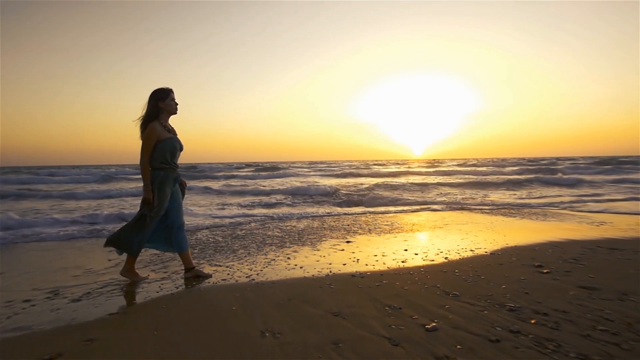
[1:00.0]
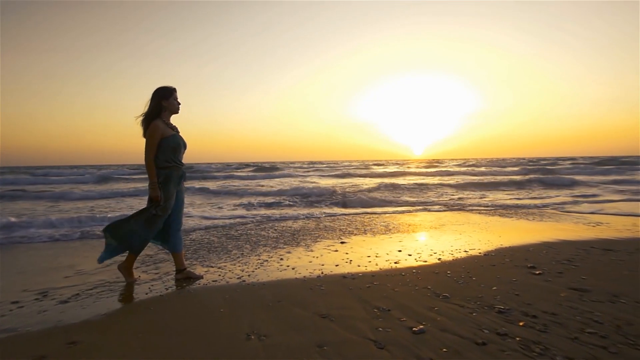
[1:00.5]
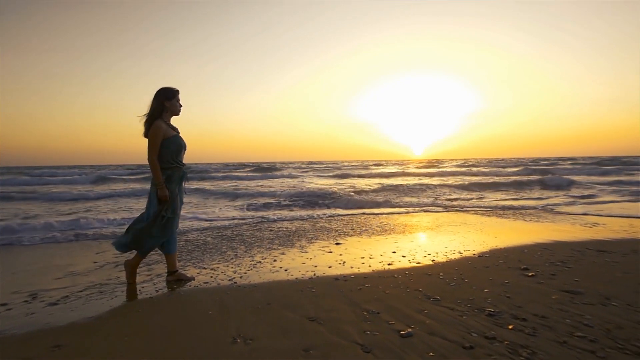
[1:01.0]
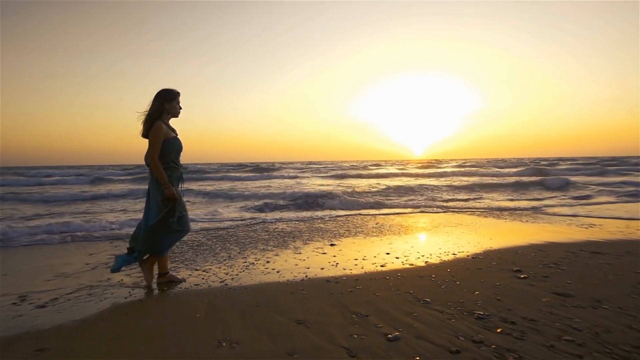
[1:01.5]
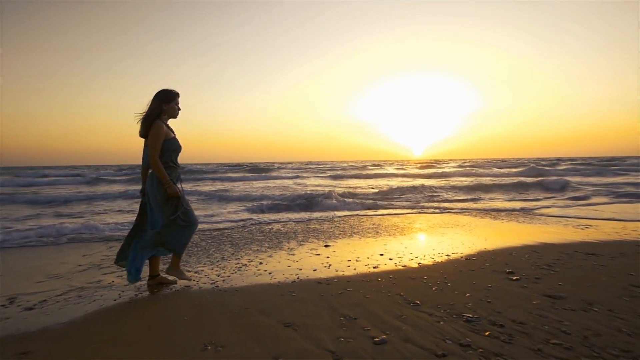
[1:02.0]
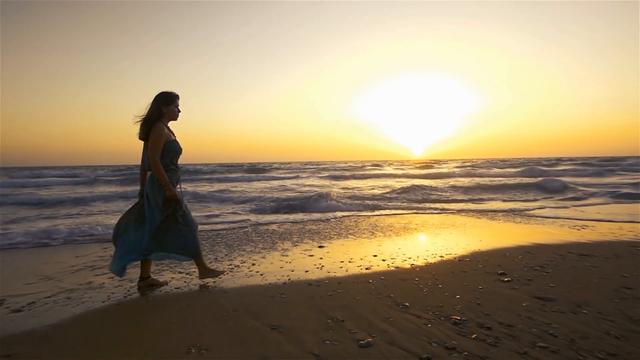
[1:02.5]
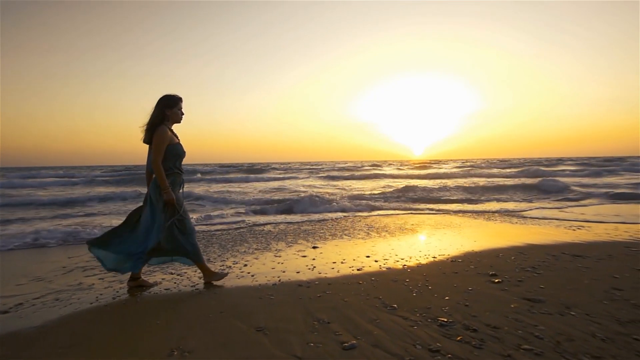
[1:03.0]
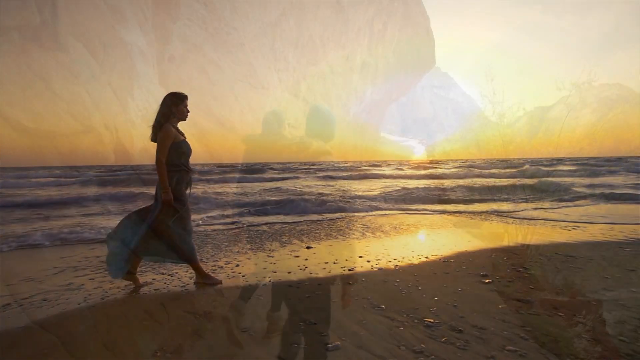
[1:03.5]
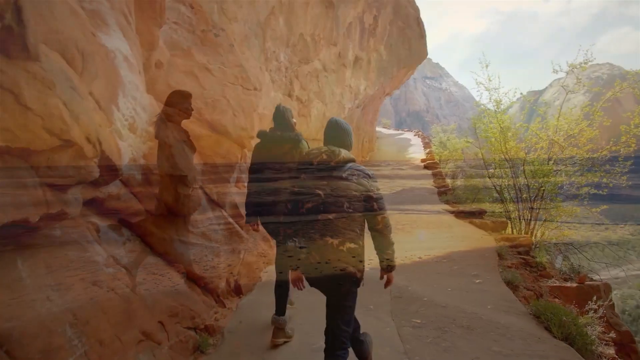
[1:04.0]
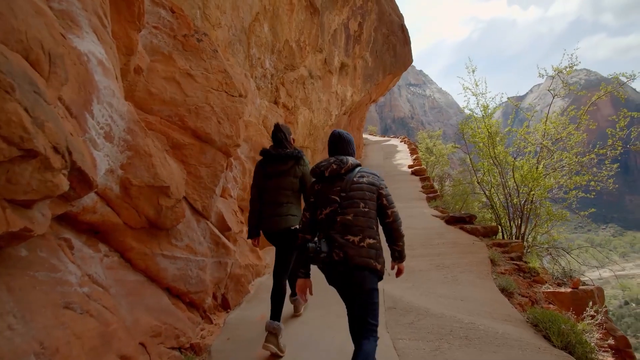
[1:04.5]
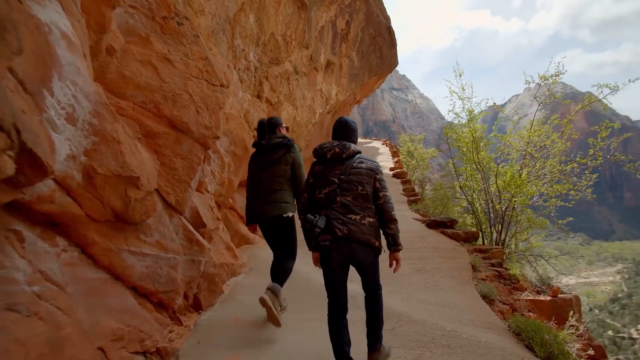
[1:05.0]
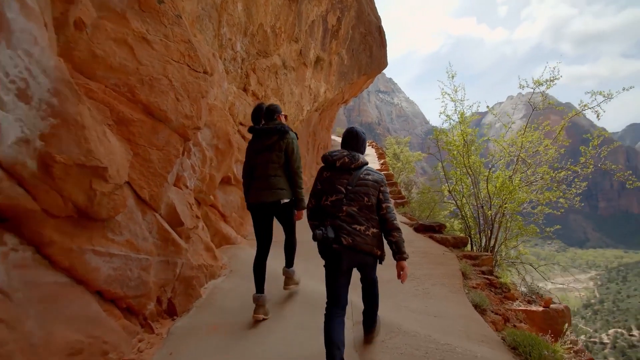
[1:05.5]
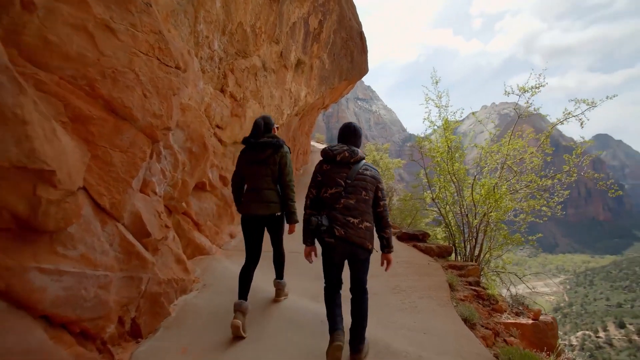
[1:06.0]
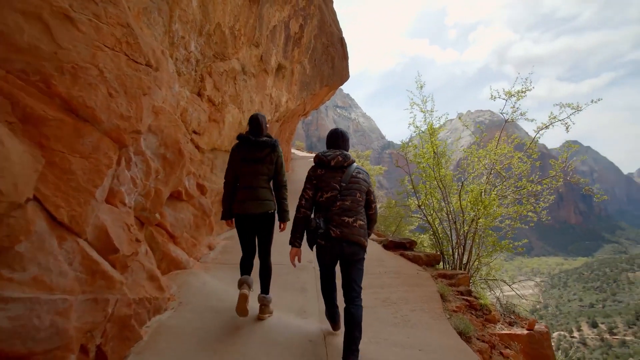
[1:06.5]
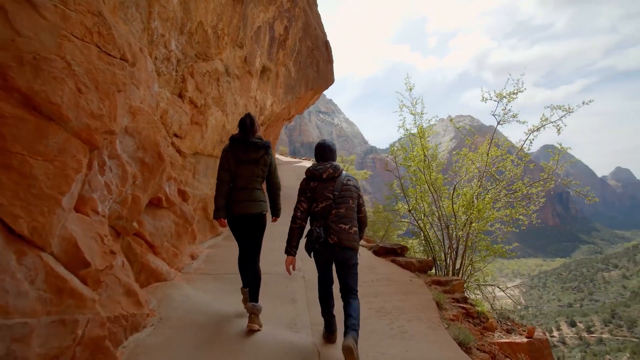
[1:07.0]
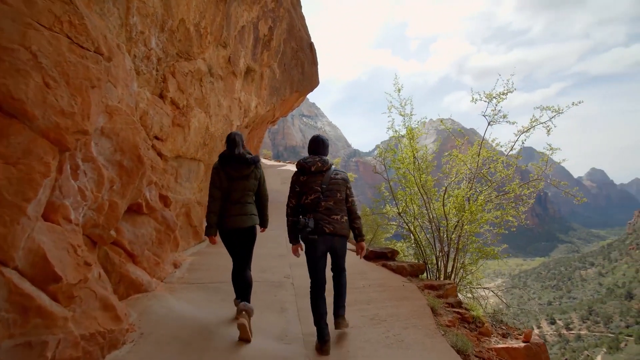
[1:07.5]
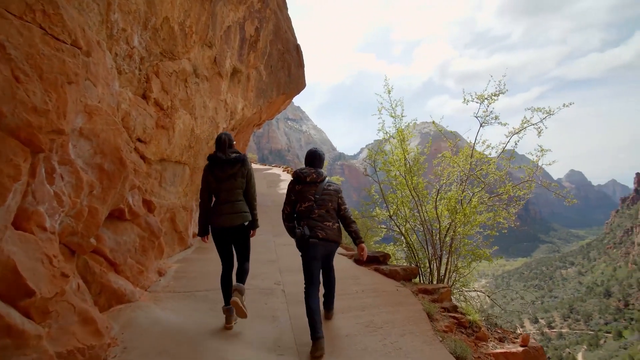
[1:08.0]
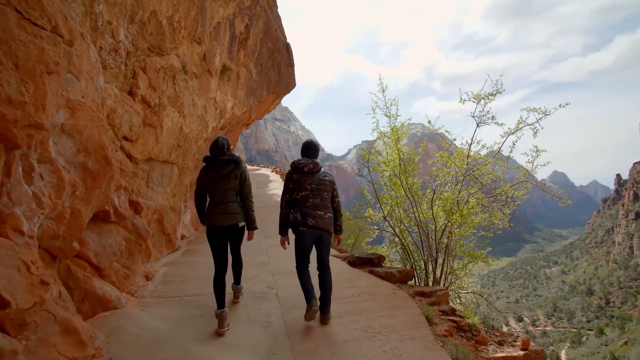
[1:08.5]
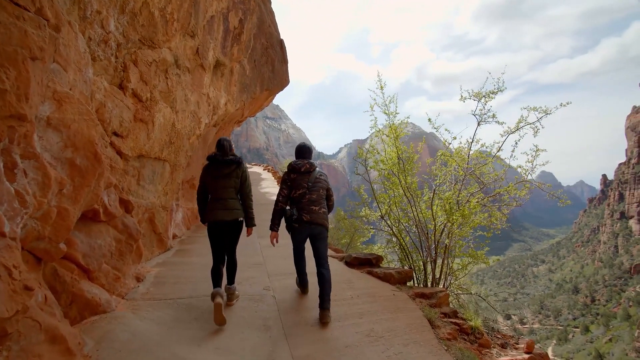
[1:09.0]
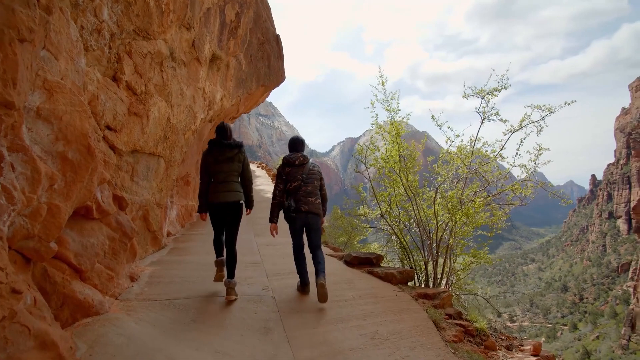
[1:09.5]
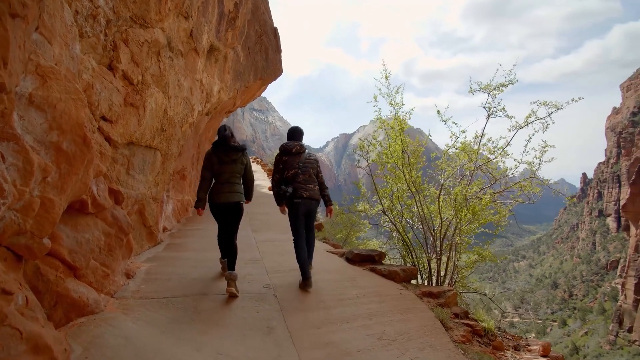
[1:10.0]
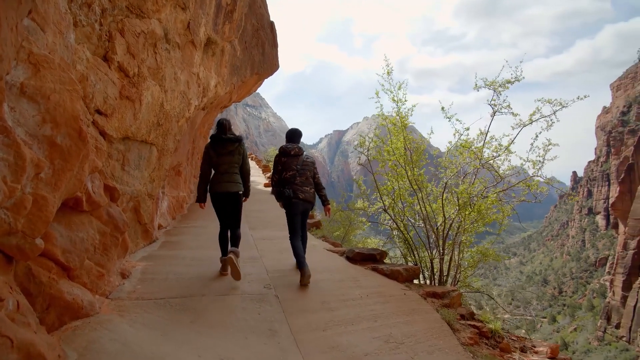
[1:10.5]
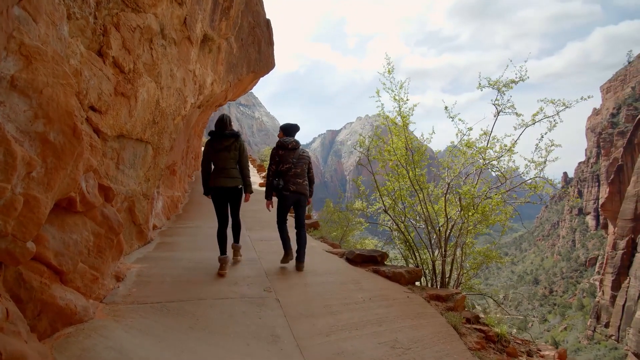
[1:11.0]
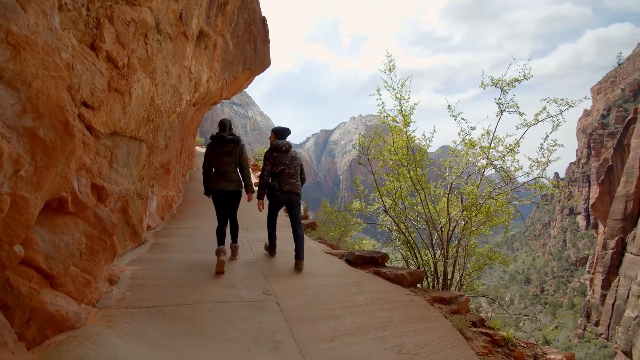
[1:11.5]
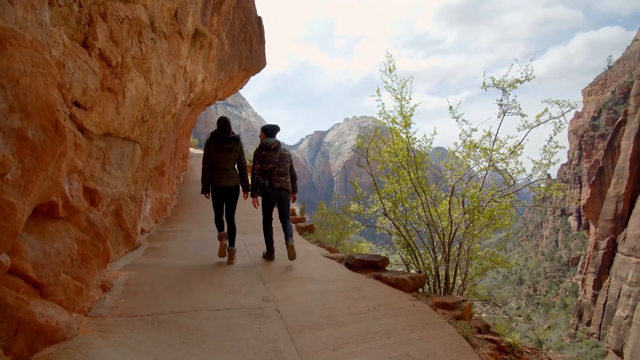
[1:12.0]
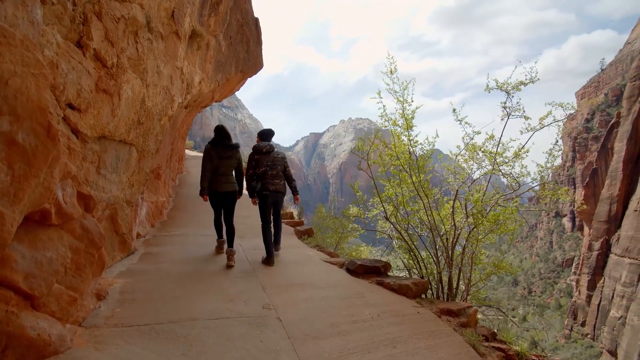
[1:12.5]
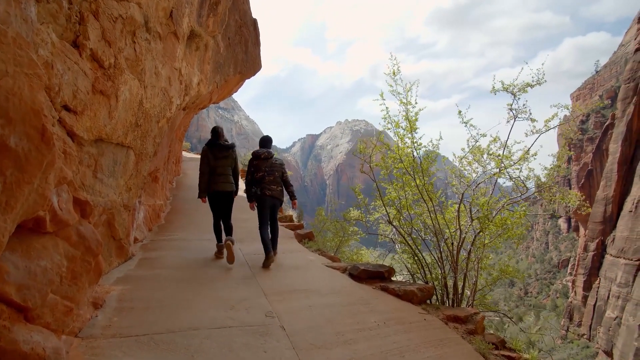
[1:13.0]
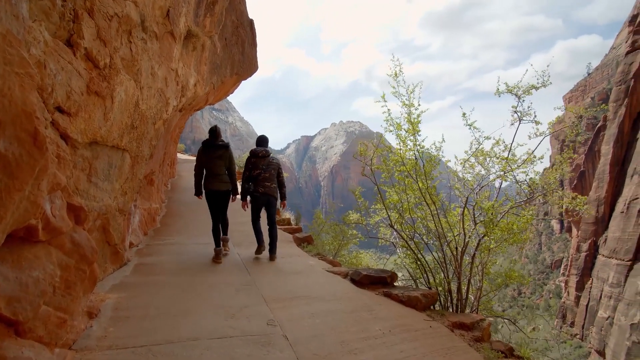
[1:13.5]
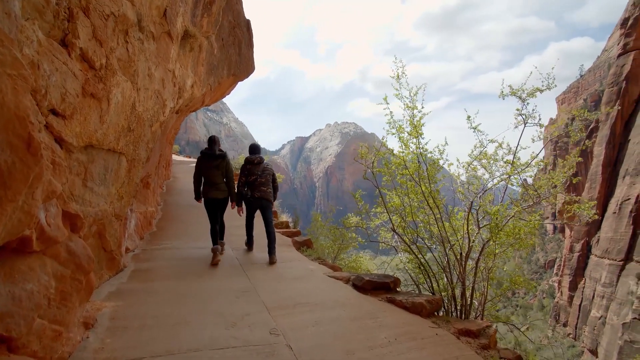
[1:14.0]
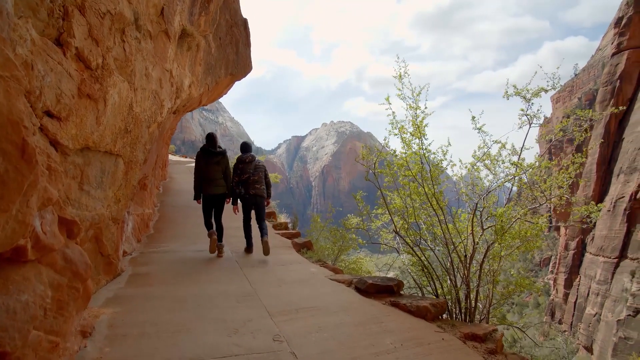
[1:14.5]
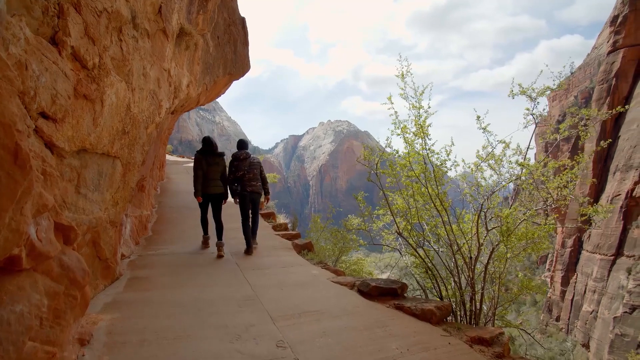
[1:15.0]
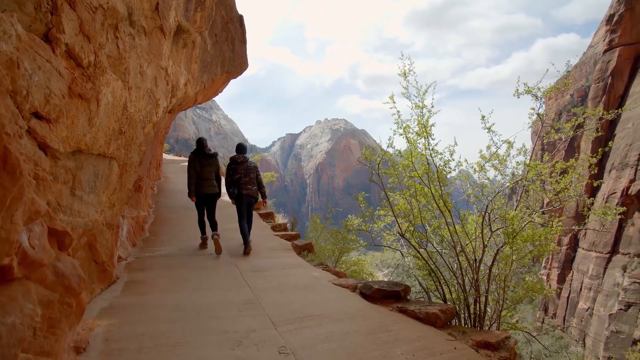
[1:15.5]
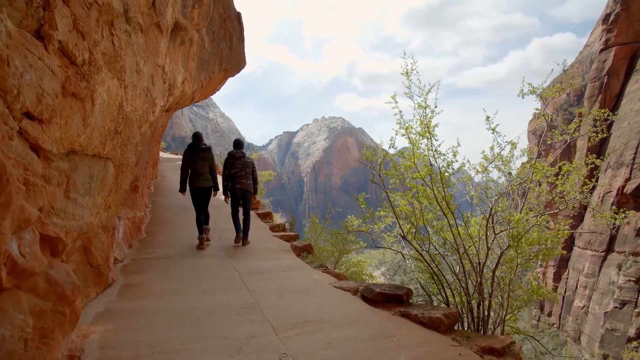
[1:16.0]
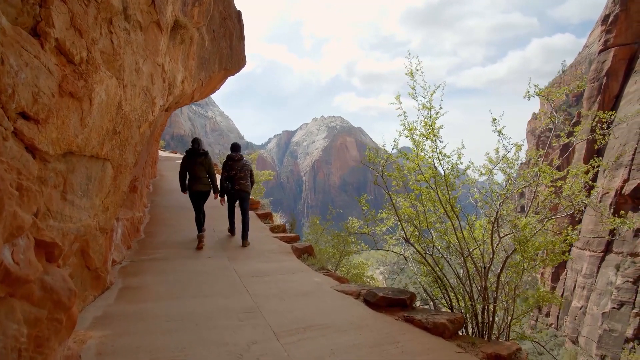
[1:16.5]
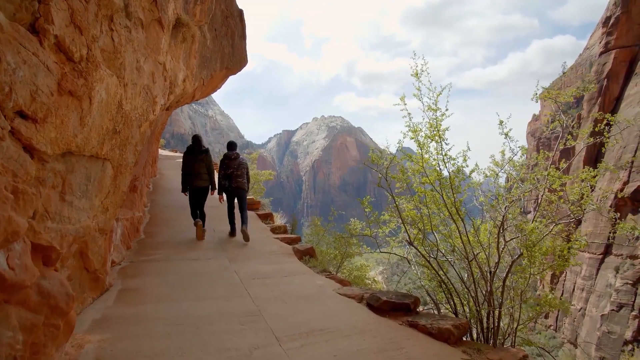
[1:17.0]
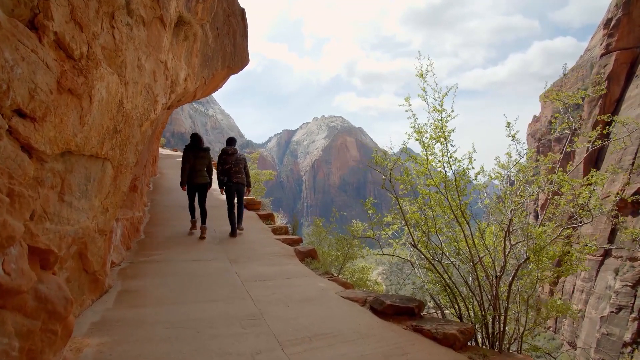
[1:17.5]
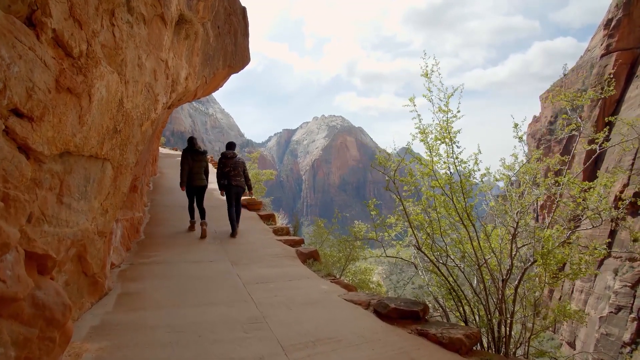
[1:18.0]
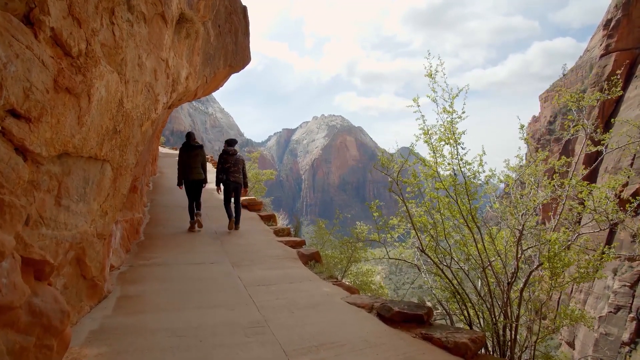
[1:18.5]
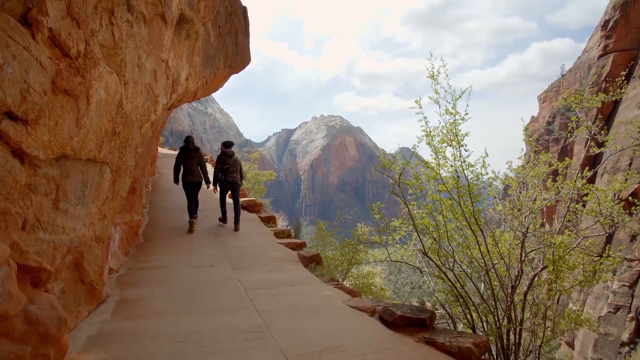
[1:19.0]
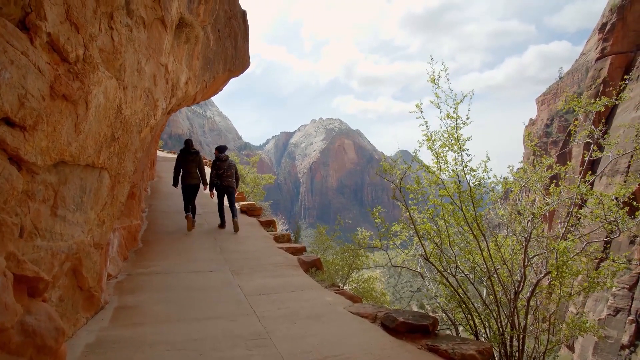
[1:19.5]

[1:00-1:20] The lady strolls along the beach in her dress. She is white and has long hair. The sun is setting, the waves are not strong, and a light wind blows her dress. She walks barefoot in a blue dress, looking down. In another place, two people, a lady and a gentleman, hike on a hill, wearing jackets, sturdy shoes and black pants. The area is hilly with mountains, and it is sunny, though their clothing suggests it may be cold. They walk in slow motion as a video effect. A plant is near the camera, and the area is hilly and rocky.